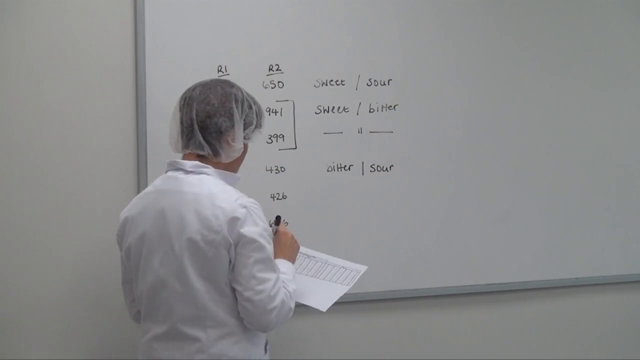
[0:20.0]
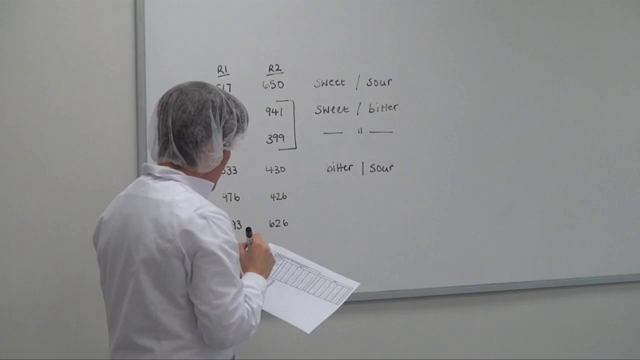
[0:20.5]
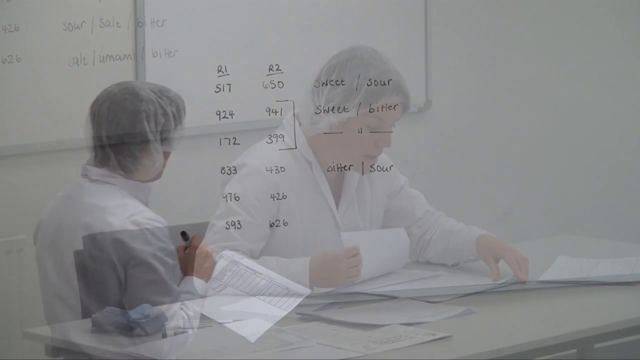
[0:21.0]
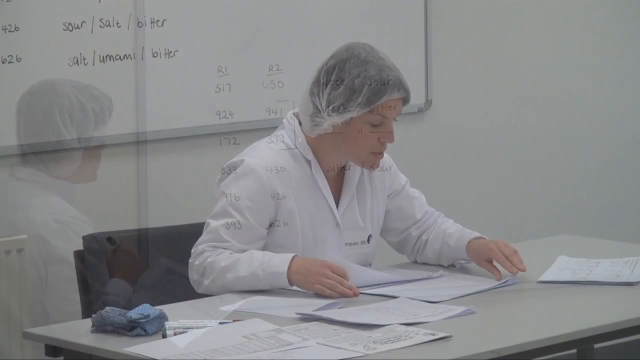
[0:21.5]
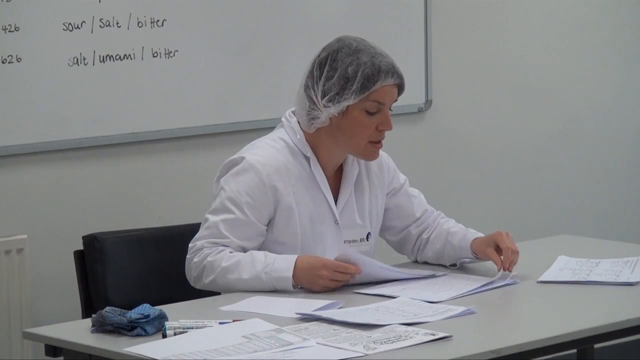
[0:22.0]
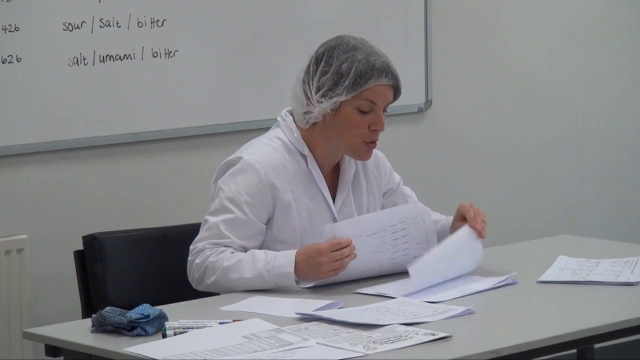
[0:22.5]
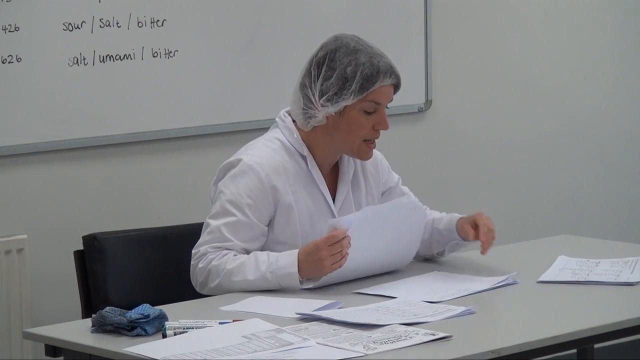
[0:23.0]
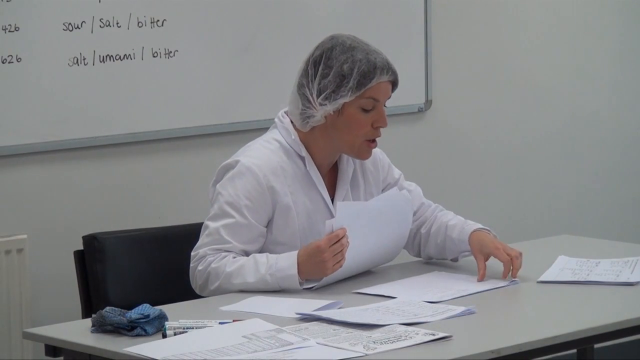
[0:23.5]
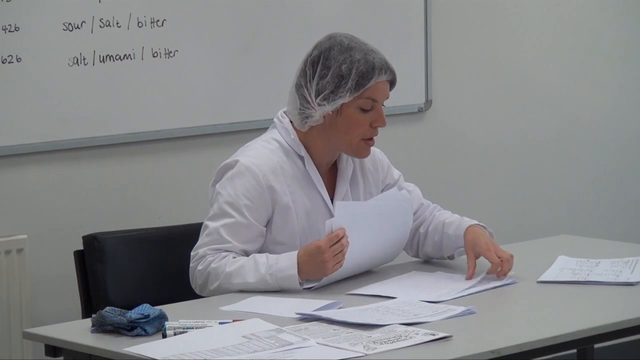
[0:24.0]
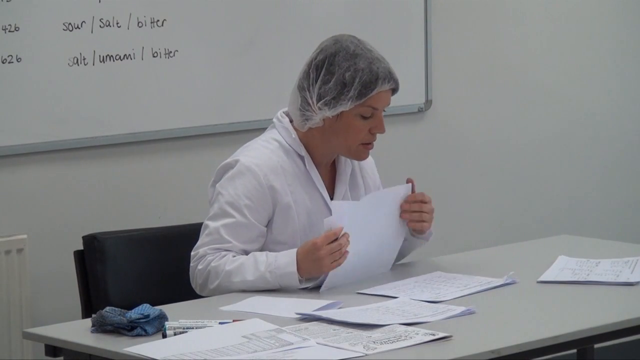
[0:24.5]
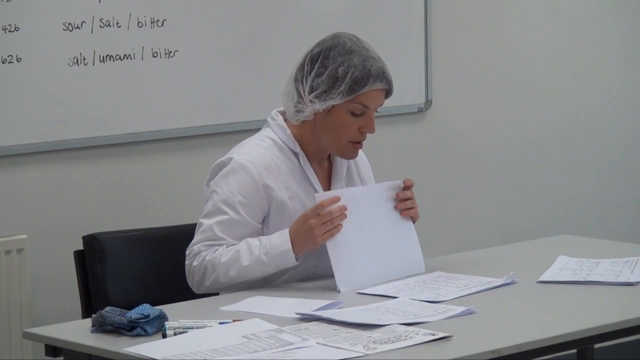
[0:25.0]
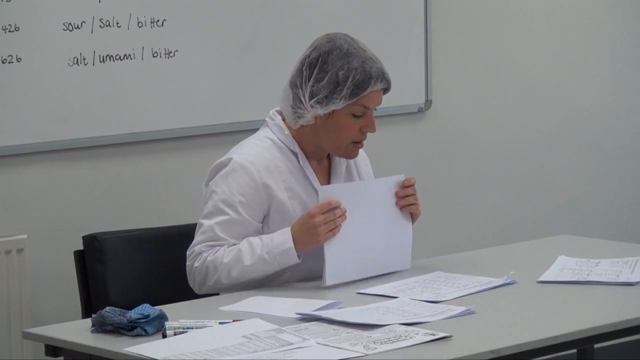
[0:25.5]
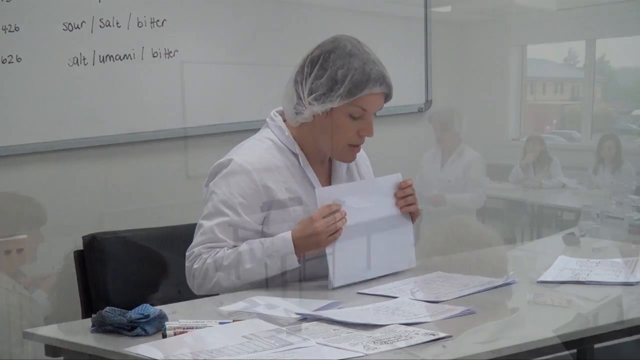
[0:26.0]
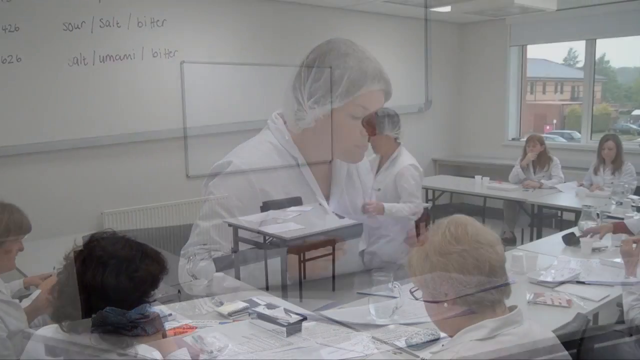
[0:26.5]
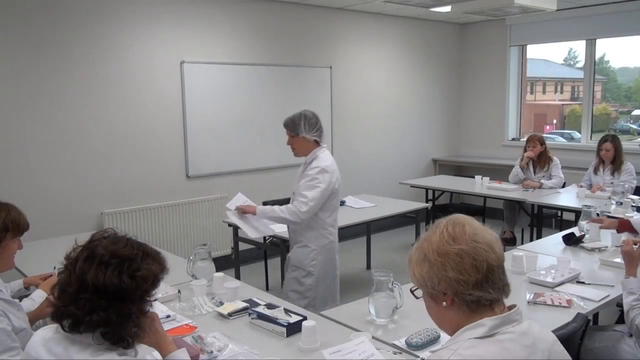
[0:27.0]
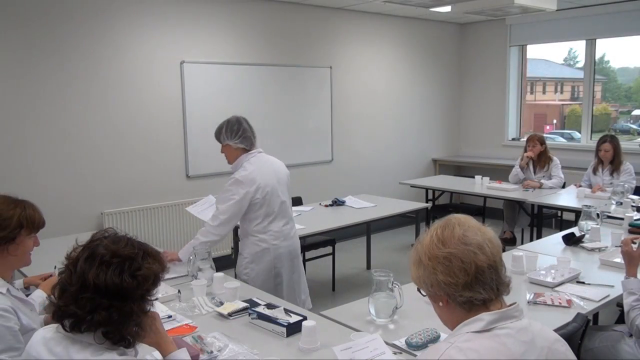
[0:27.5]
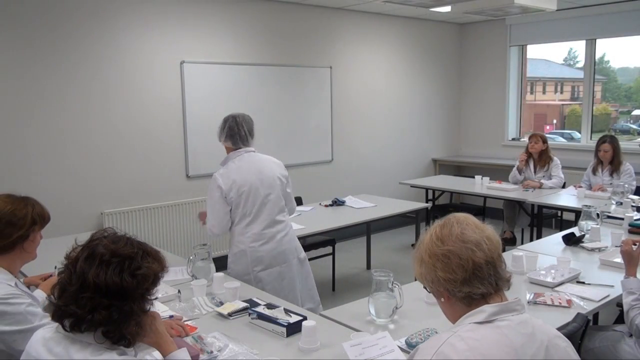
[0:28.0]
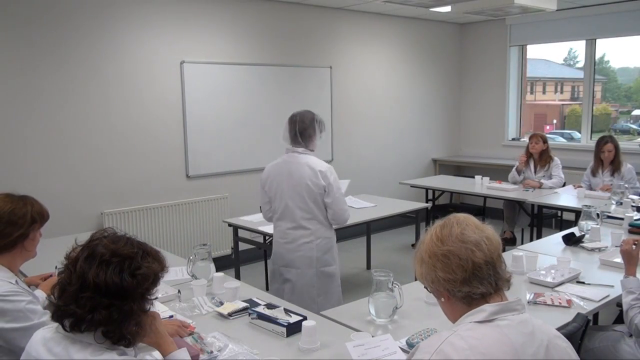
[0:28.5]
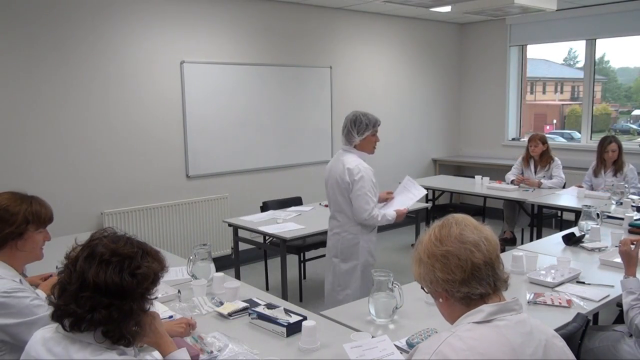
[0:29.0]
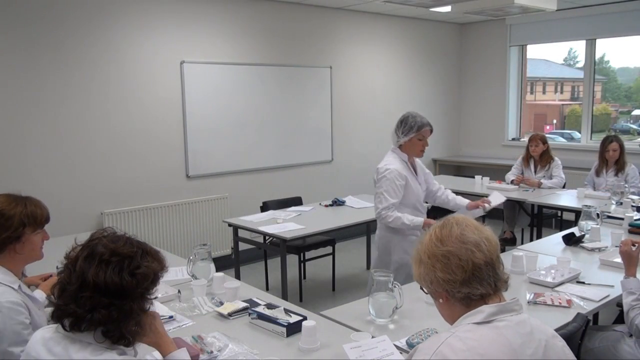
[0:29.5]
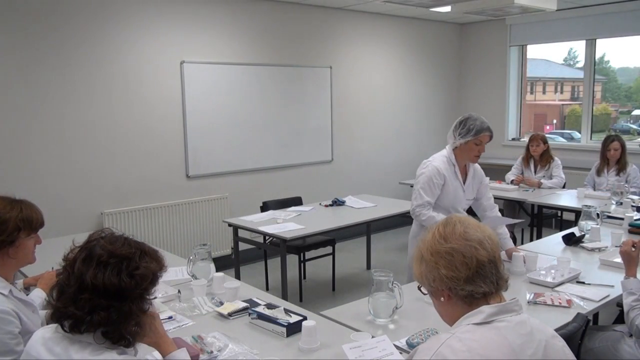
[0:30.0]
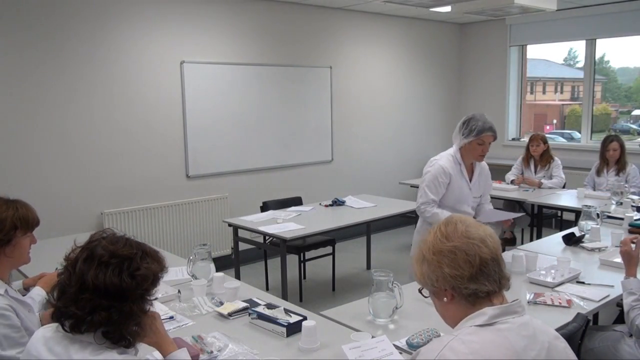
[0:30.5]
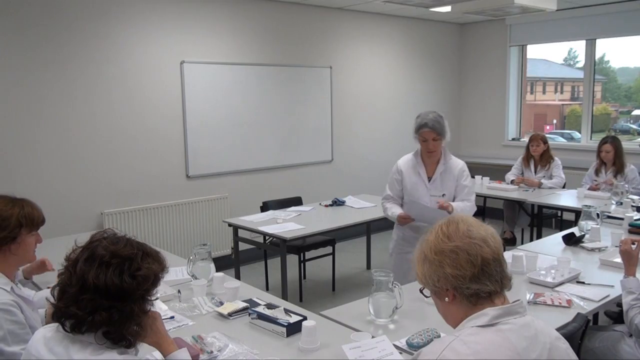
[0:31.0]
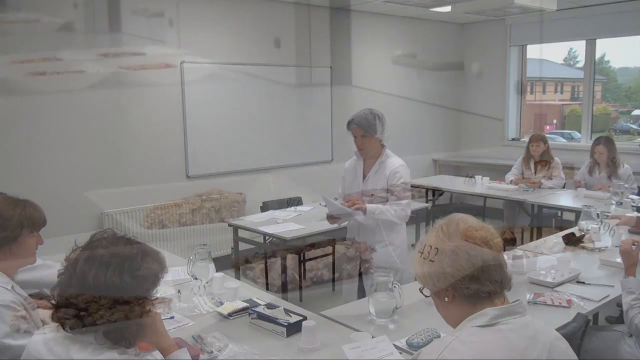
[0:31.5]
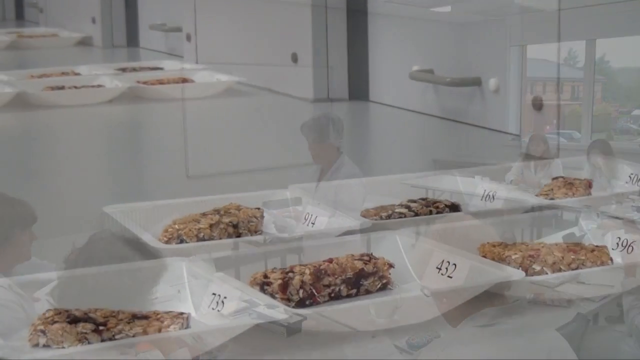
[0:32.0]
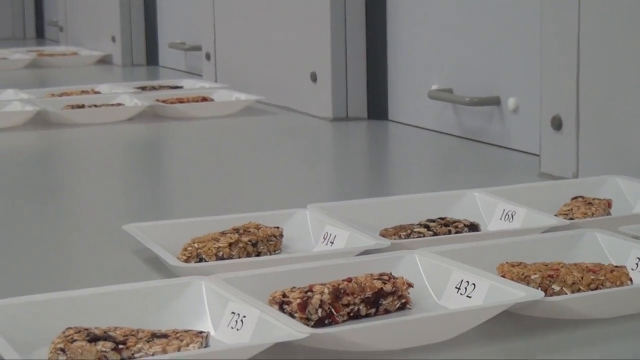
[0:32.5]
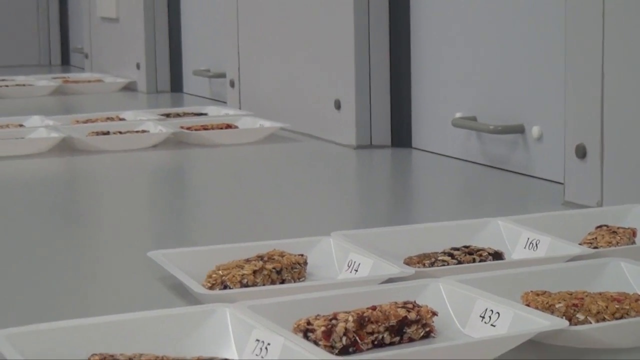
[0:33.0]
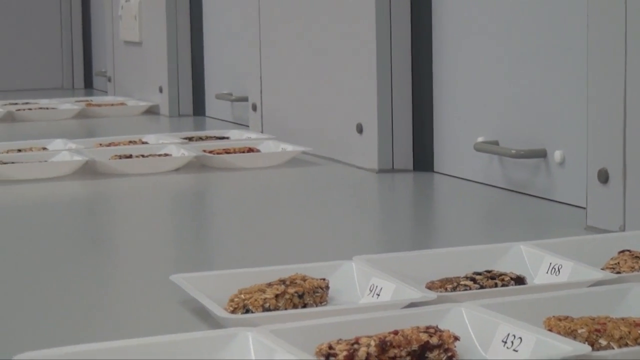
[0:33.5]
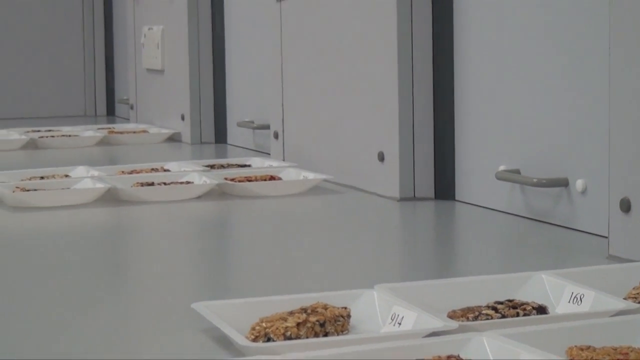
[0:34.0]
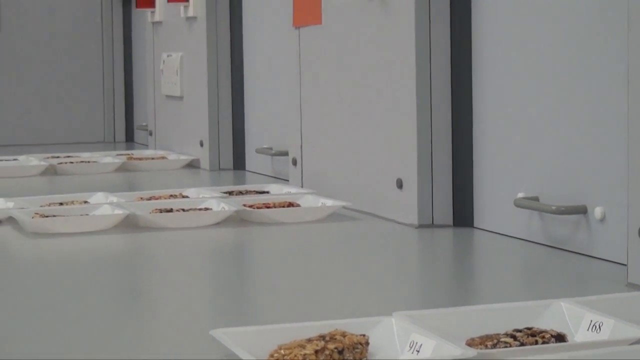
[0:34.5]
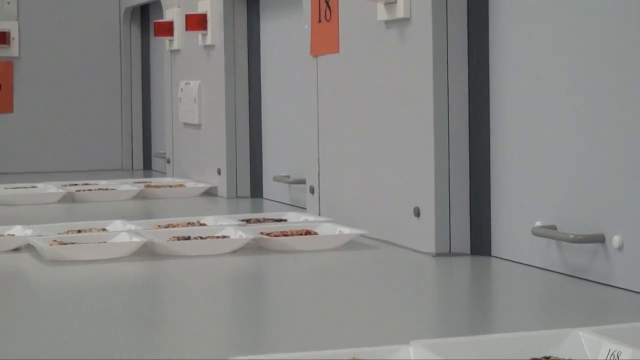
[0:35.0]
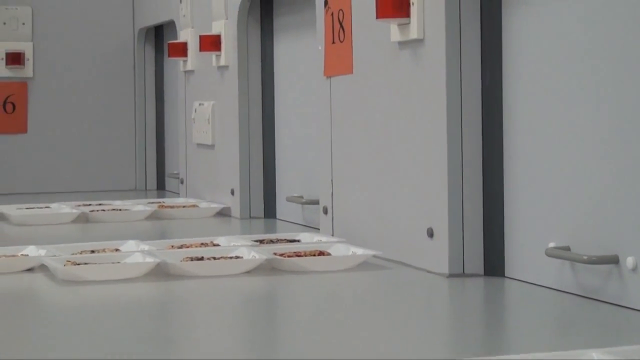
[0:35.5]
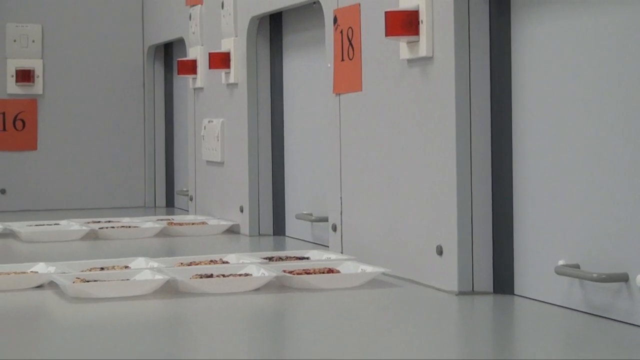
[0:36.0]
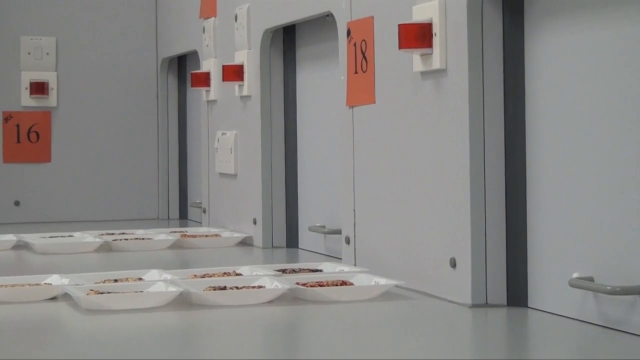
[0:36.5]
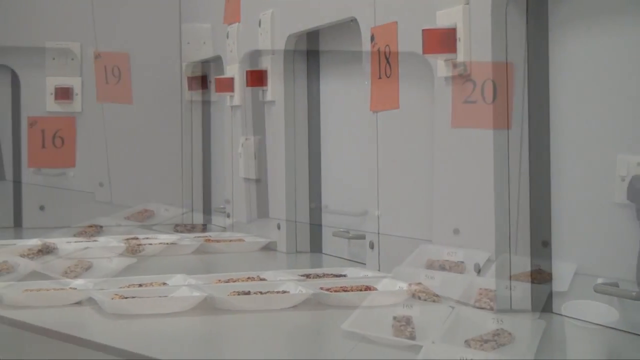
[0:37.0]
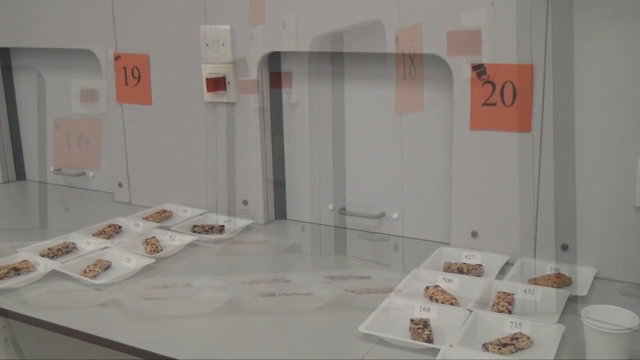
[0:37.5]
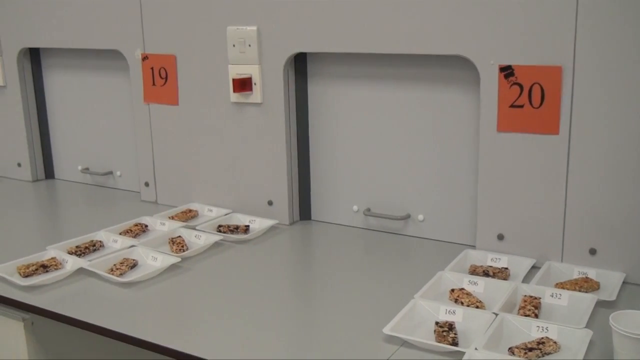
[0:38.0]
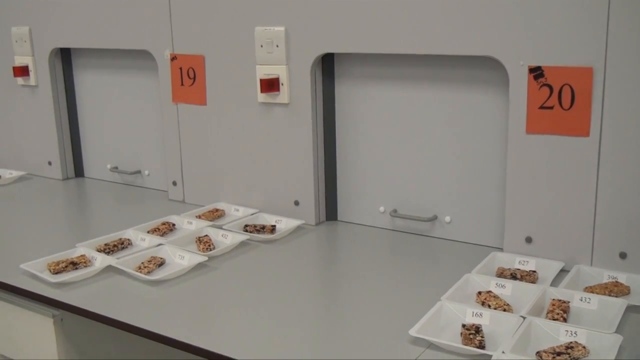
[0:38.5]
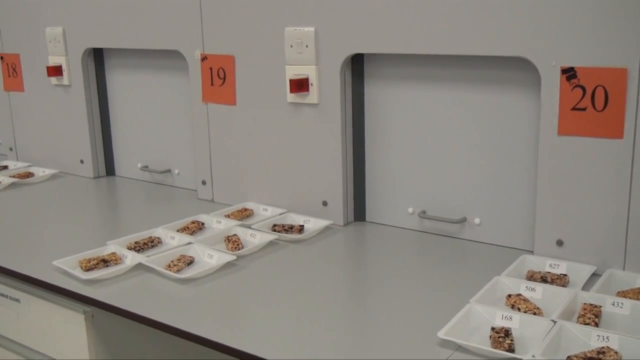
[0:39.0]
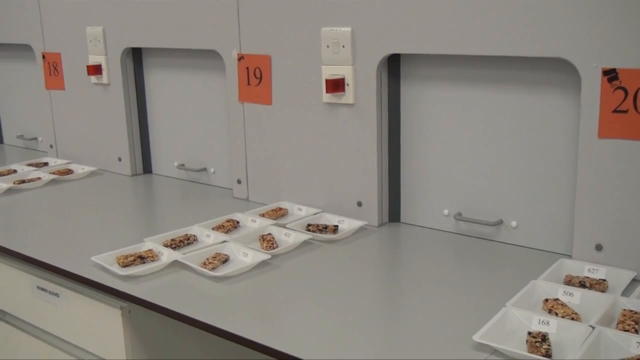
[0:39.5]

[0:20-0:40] The woman continues writing on the board. Among the words are "sour", "salt", "bitter", then "salt", "umami", "bitter", written in black, all in lowercase, on a whiteboard. She is now seated on a black chair at a white, cream-white table, apparently going through some papers, maybe trying to understand something. She wears protective headgear, the kind of wrap used in the food industry or when cooking to keep hair in place. The wall of the room looks whitish. Taking some papers, she distributes them to the women seated in the room.